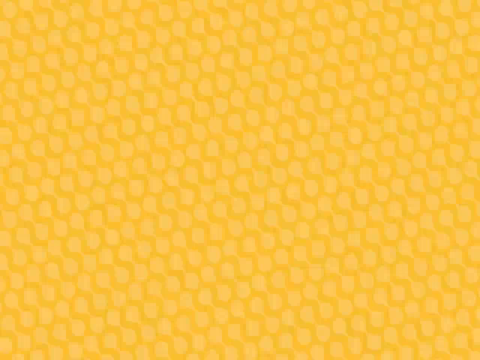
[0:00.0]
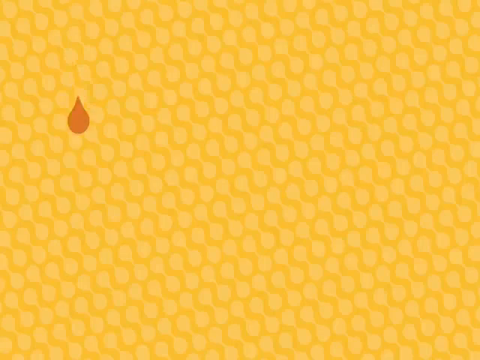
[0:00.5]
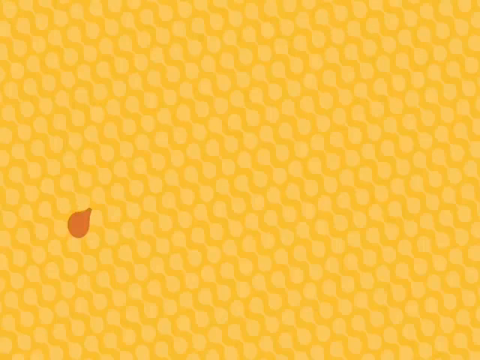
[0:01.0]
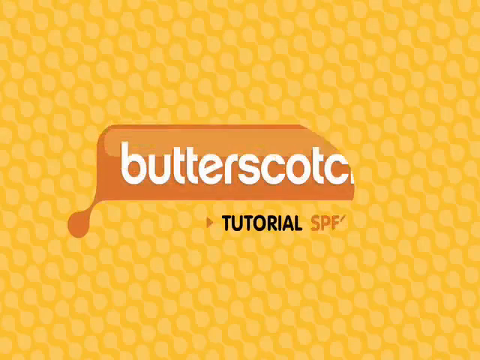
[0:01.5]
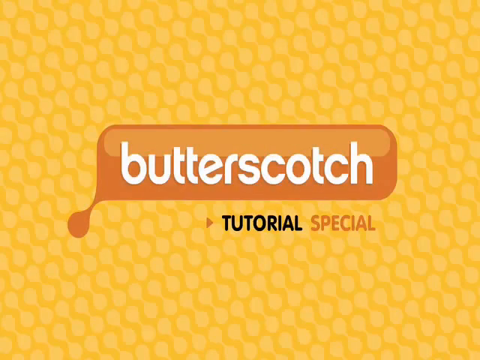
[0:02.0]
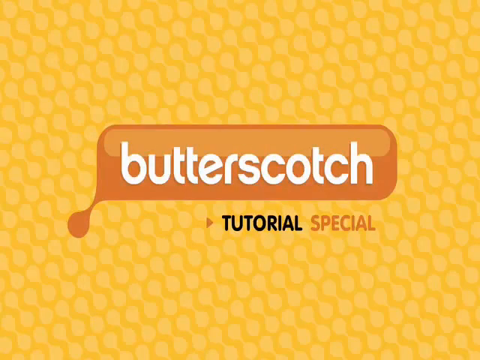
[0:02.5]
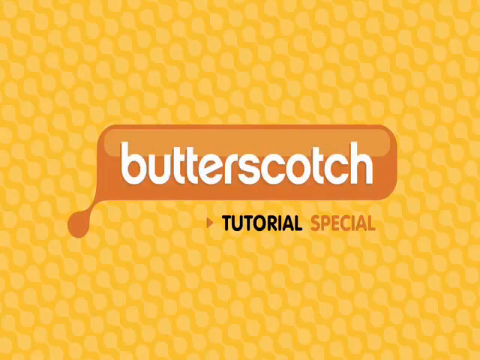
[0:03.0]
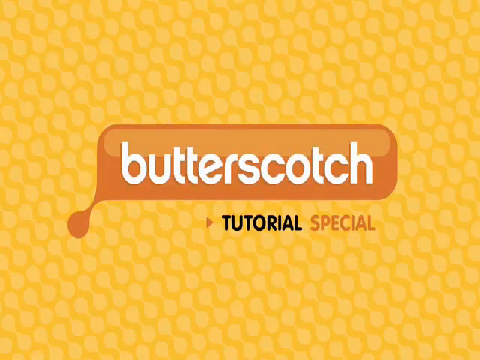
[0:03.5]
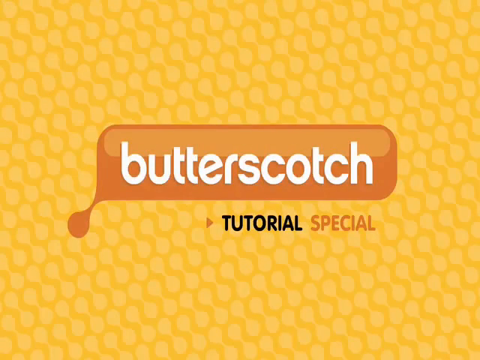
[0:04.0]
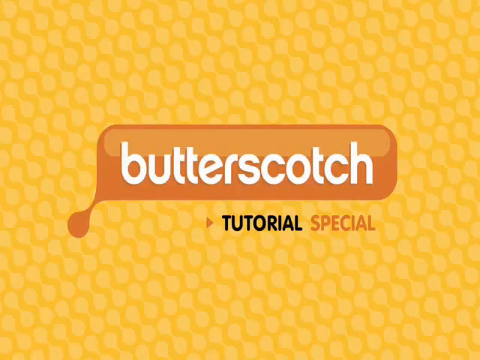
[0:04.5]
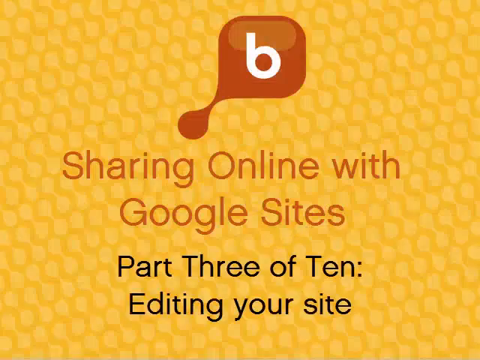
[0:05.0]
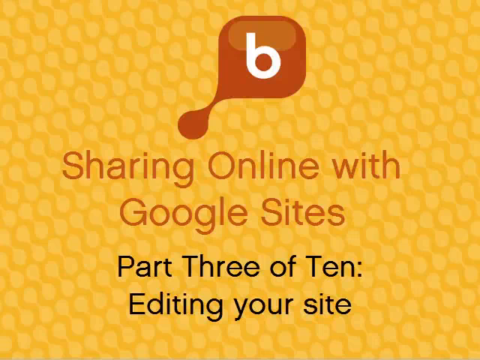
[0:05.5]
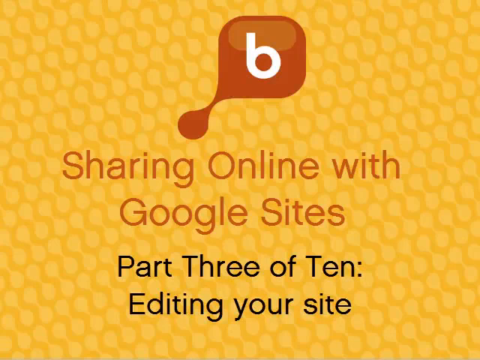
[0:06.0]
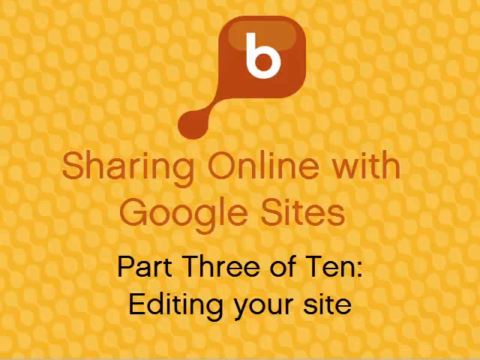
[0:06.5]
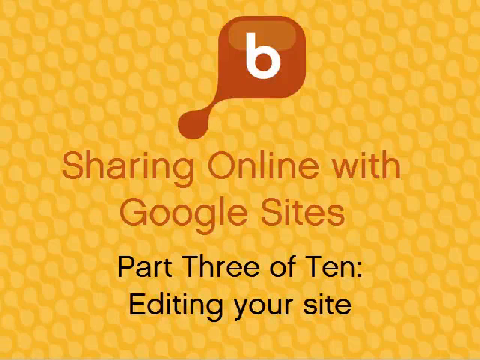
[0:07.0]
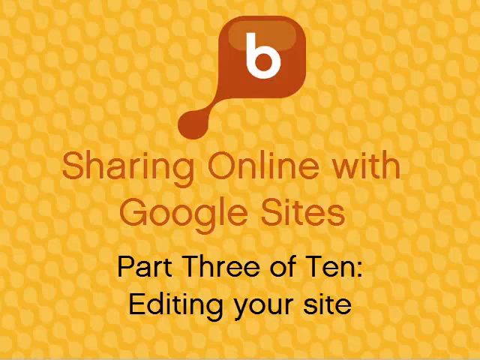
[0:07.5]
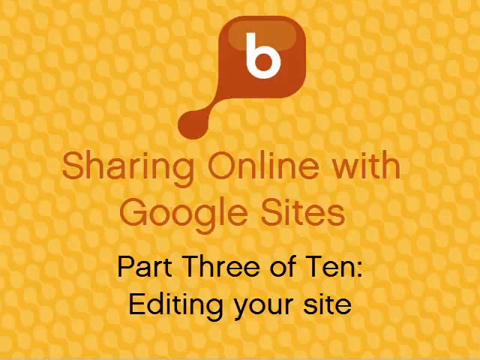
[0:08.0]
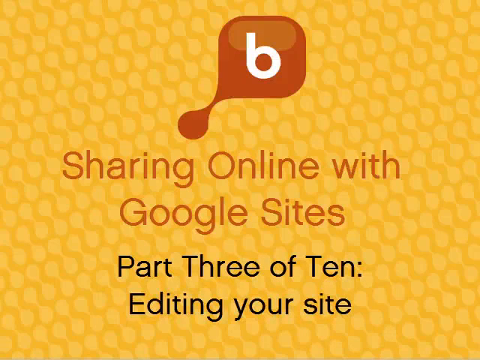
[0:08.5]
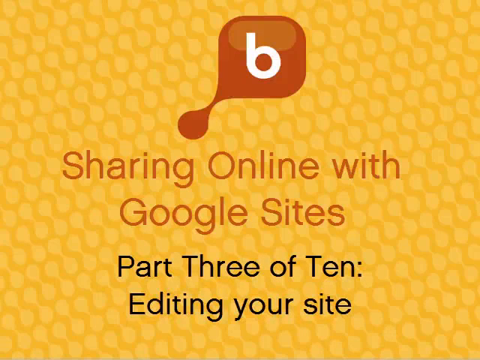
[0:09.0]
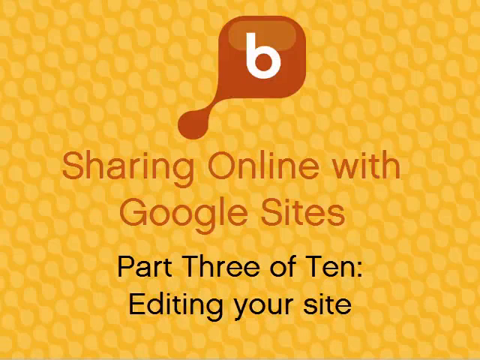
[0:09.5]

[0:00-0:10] The video opens on a yellow backdrop that partially kind of resembles a hive. A brown drop hits, and the word "butterscotch" appears in the center within a brown structured heading. Another page then opens, like a PowerPoint presentation, showing the letter B inside a brown, butterscotch-colored bubble. Underneath it reads "sharing online with Google Sites, part 3 of 10, editing your site," and more information is shown before the video pauses.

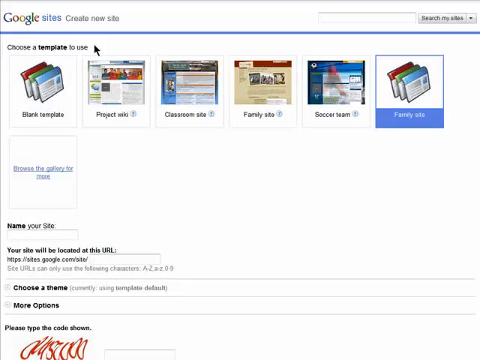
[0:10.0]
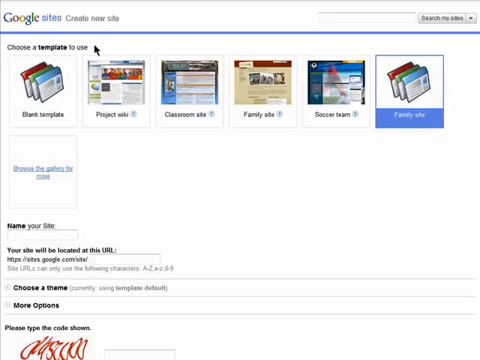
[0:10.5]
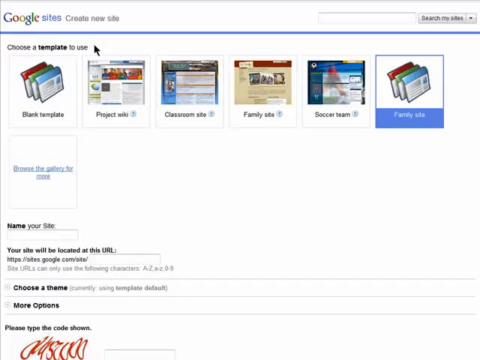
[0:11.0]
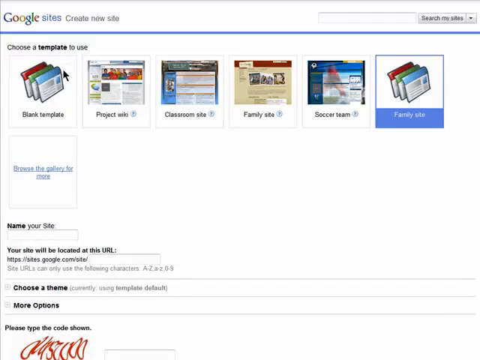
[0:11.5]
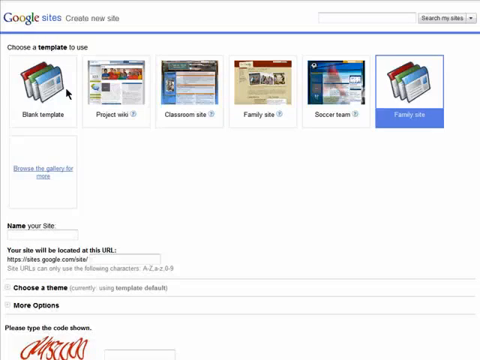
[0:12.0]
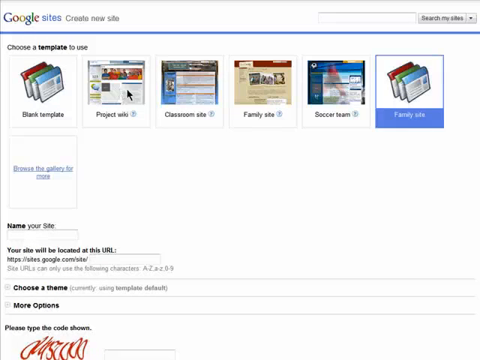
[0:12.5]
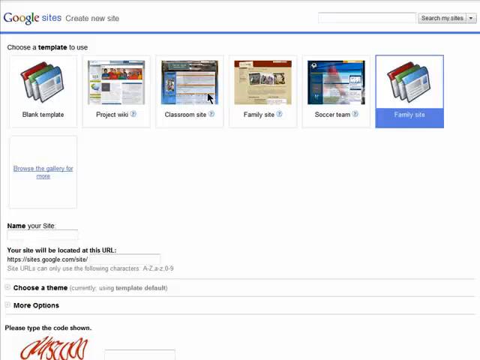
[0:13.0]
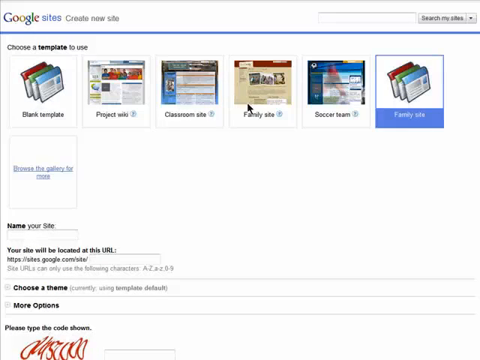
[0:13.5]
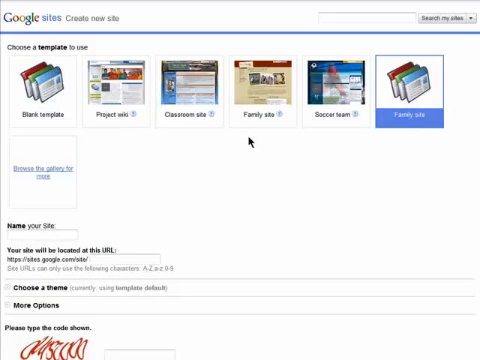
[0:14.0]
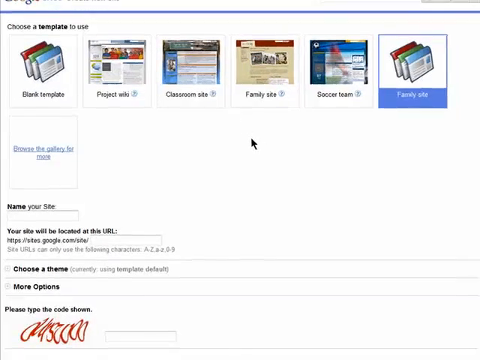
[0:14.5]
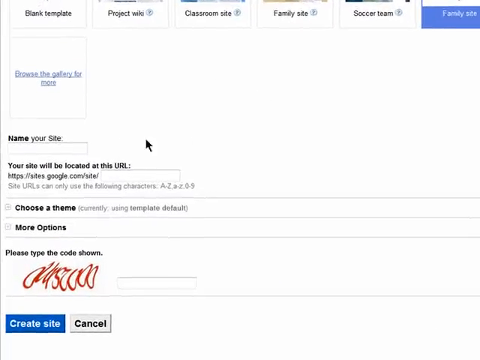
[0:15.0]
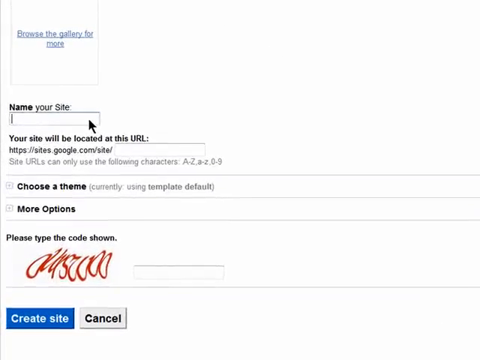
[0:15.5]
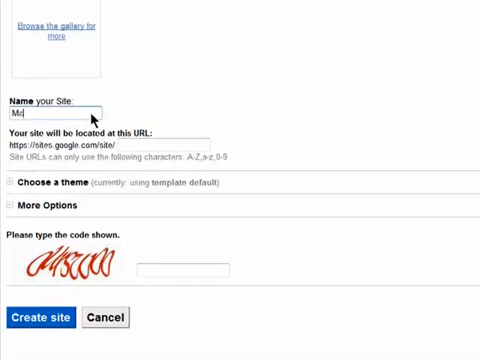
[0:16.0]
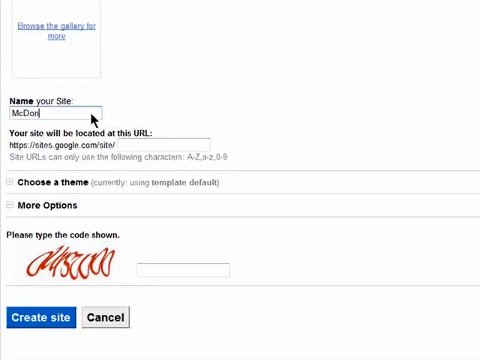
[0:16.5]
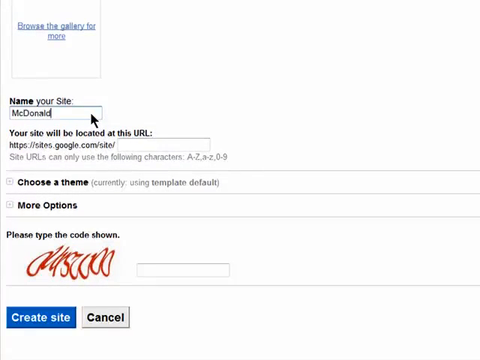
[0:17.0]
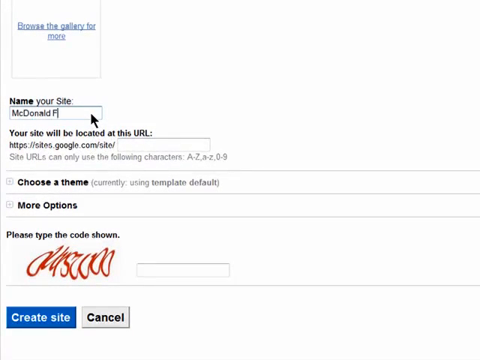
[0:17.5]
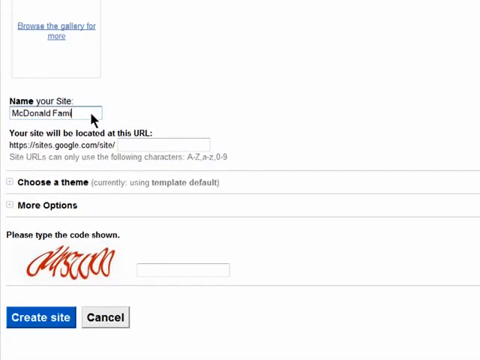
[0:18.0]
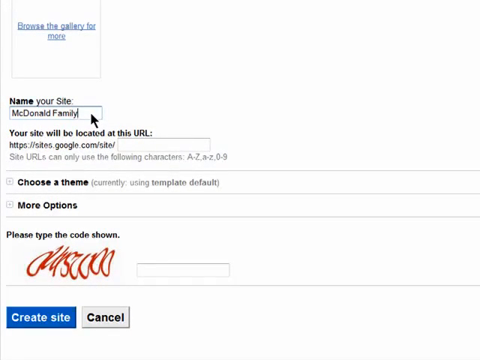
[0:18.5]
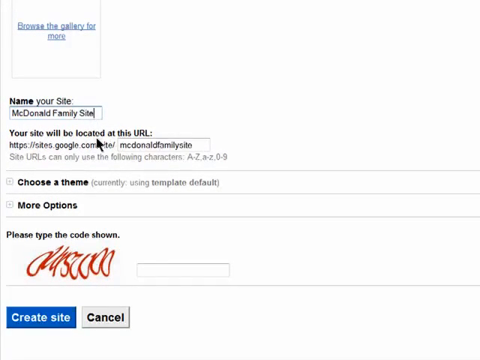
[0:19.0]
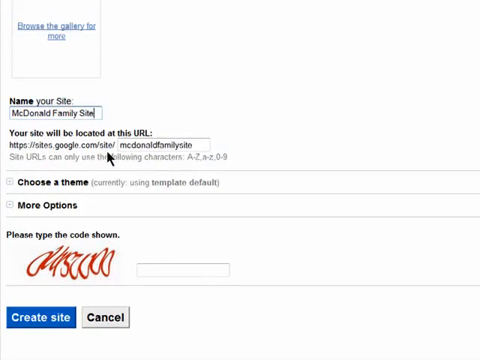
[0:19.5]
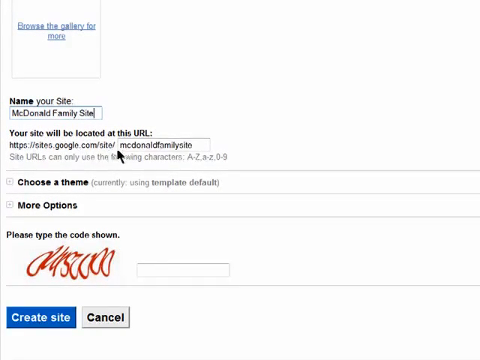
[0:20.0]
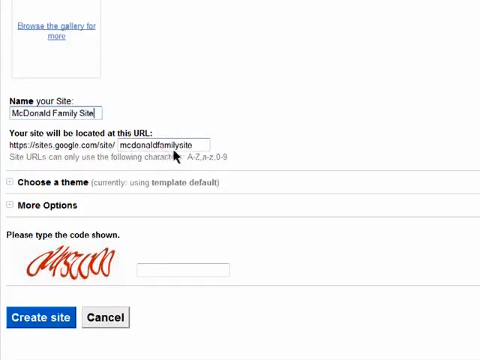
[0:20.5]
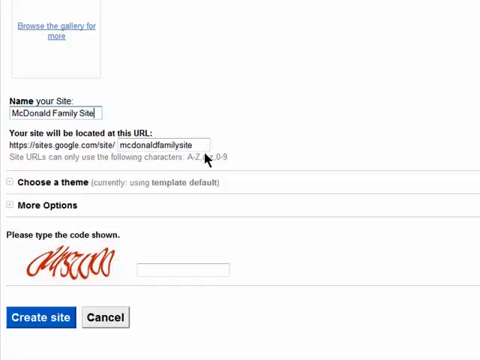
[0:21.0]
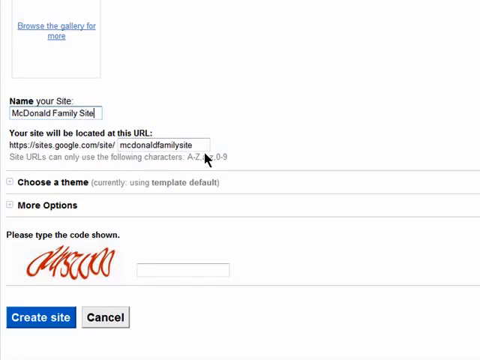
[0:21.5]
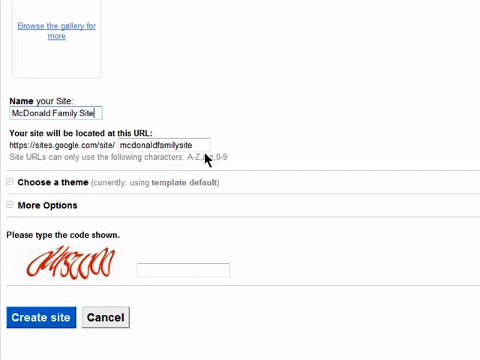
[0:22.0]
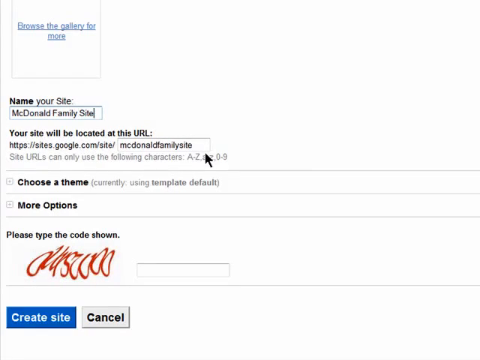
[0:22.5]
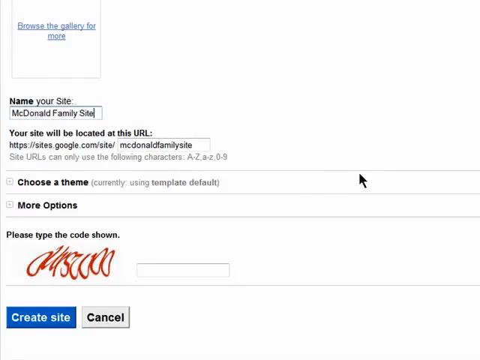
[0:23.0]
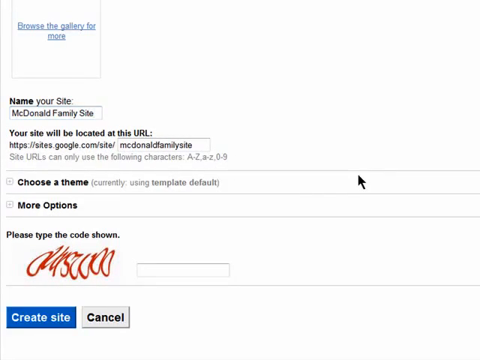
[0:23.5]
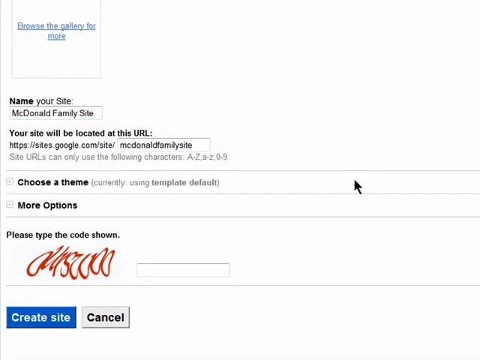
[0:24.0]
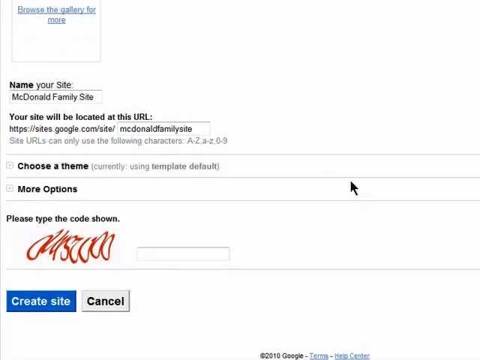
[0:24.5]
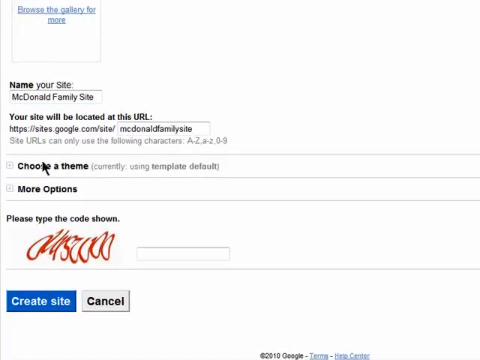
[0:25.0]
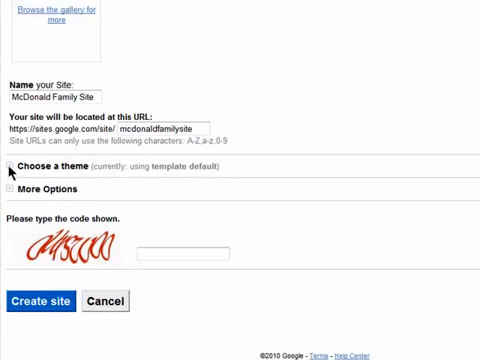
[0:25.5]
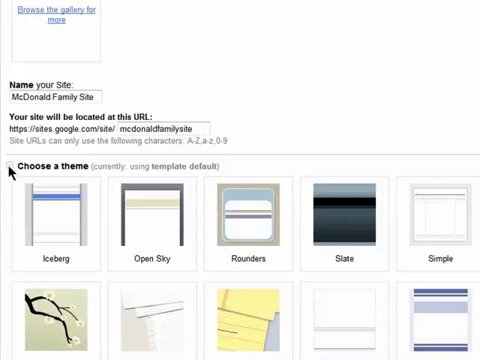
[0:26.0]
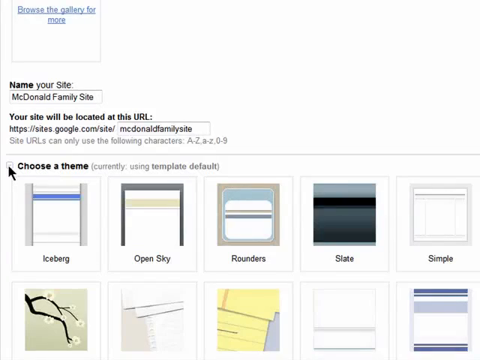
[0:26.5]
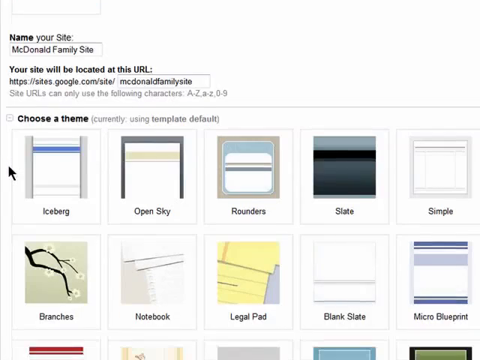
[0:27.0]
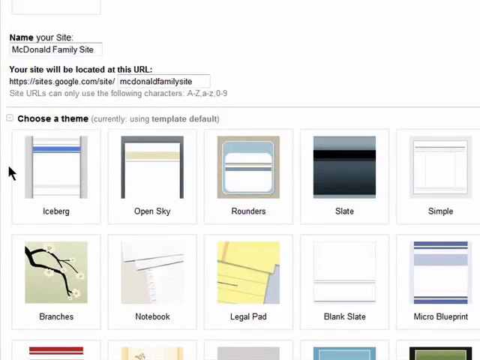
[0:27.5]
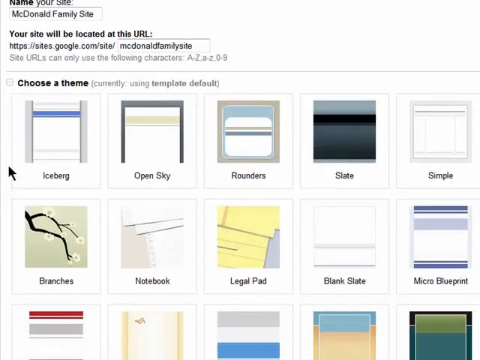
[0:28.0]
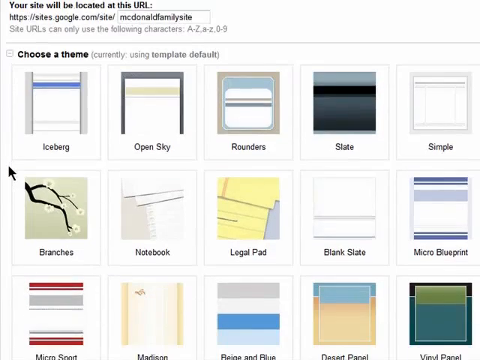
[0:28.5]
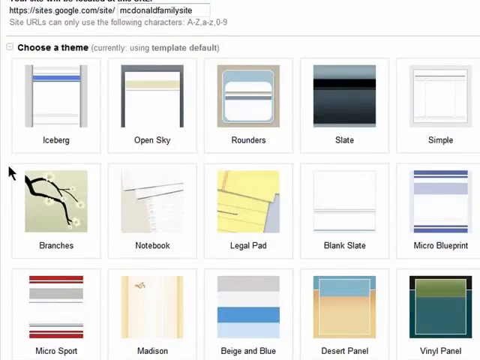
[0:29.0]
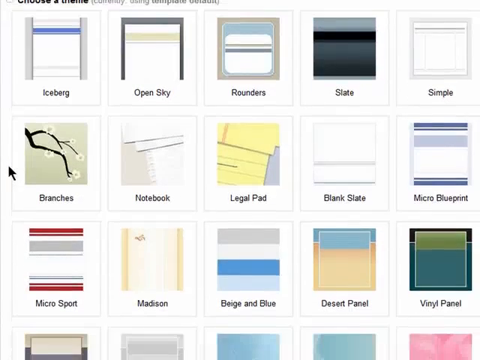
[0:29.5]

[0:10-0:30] A page of items appears with "Google Sites" in the left-hand corner. Next to it, somewhat faded, apparently reads "Create New." On the right side there is what looks like a search bar, another button whose text is difficult to make out, and a drop-down arrow. A series of templates is presented, six of them visible with an image next to each. The page reads "Name Your Site," and a field appears where the user types in a family site name, which generates a URL. The user then moves on to choosing a theme, clicks the square next to that selection, and a series of templates comes up; the first is called "Iceberg," followed by more rows of templates.